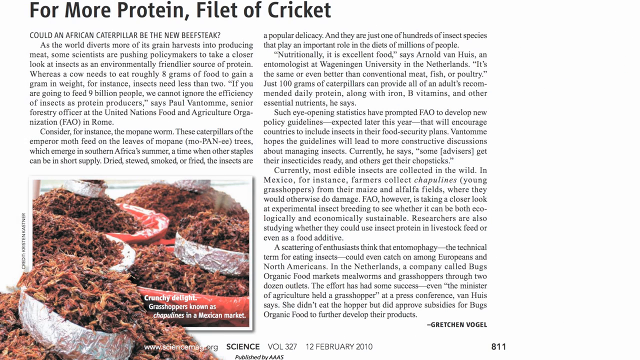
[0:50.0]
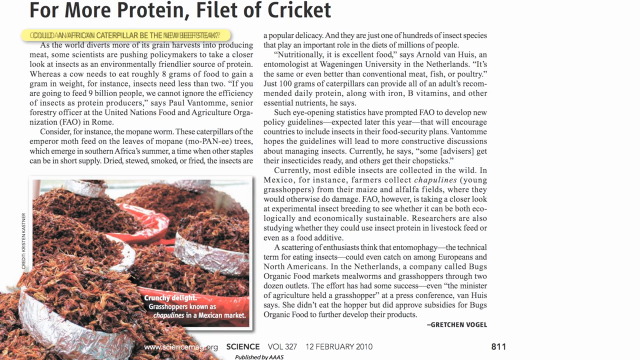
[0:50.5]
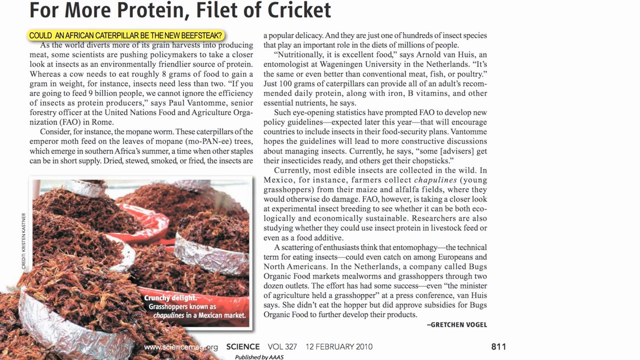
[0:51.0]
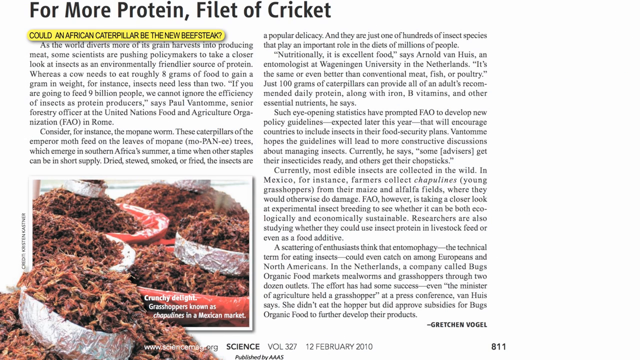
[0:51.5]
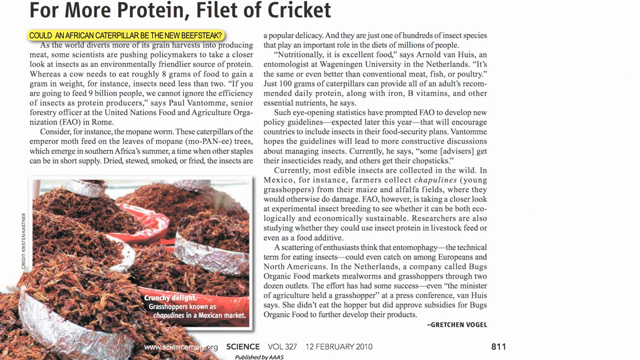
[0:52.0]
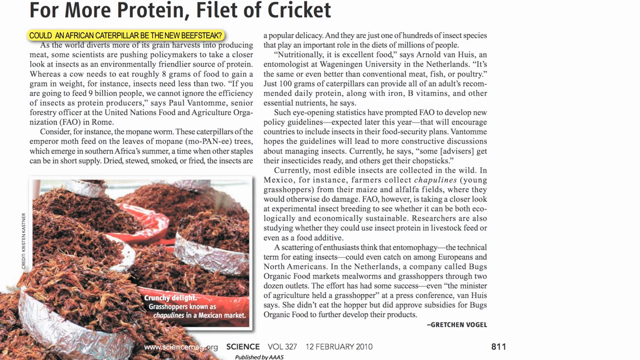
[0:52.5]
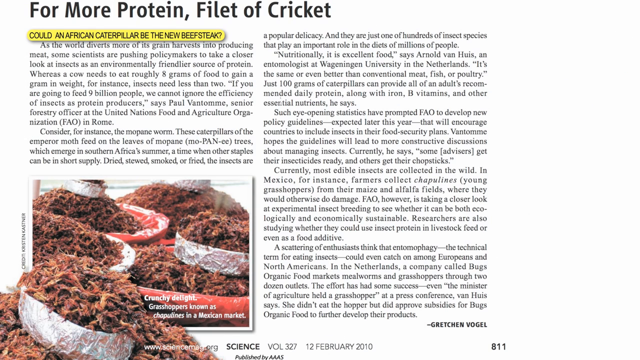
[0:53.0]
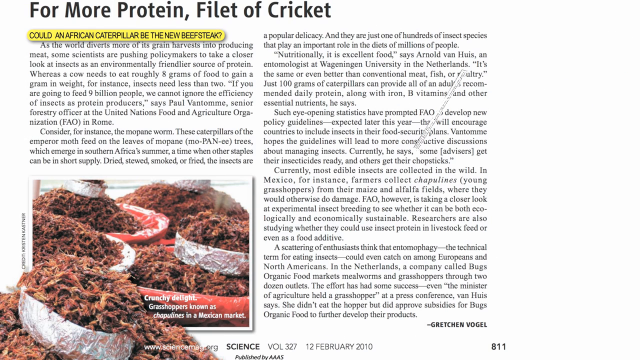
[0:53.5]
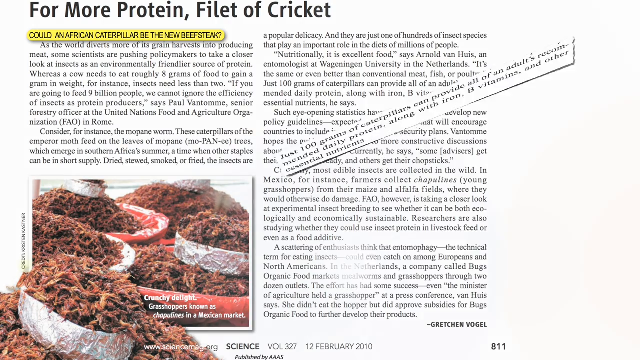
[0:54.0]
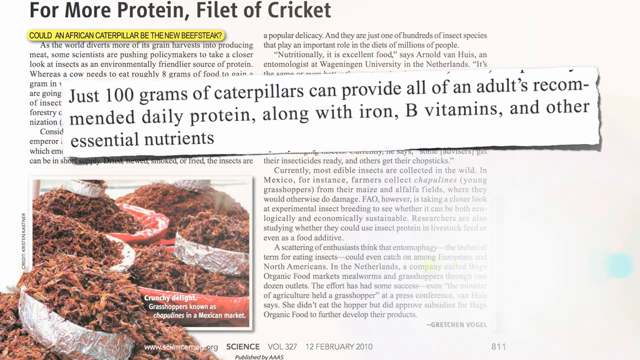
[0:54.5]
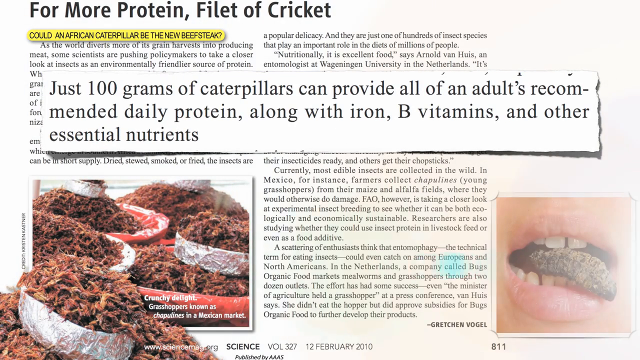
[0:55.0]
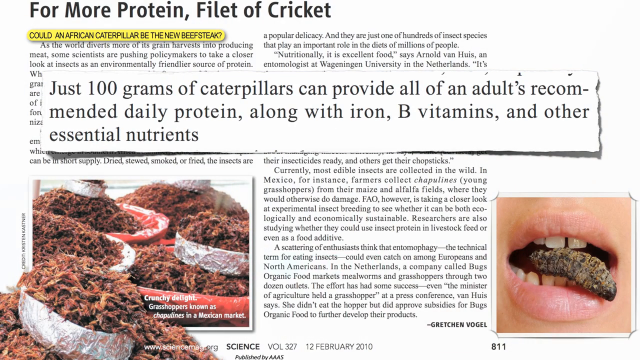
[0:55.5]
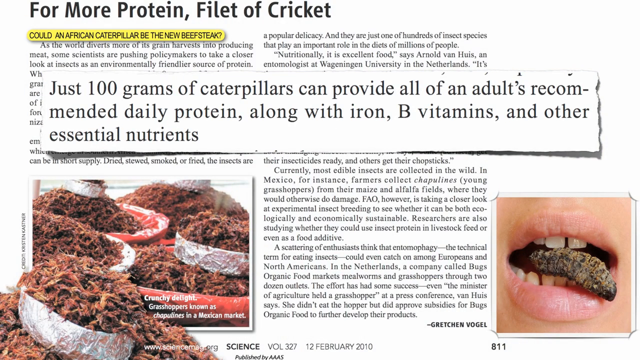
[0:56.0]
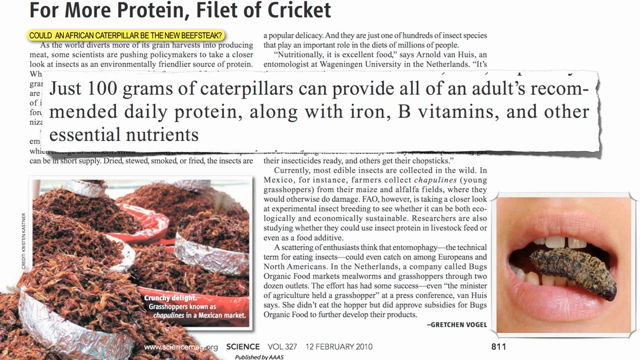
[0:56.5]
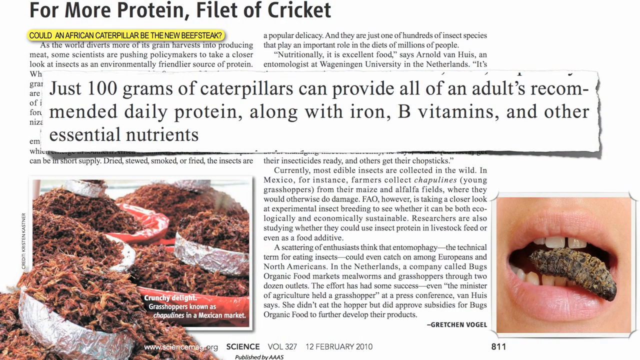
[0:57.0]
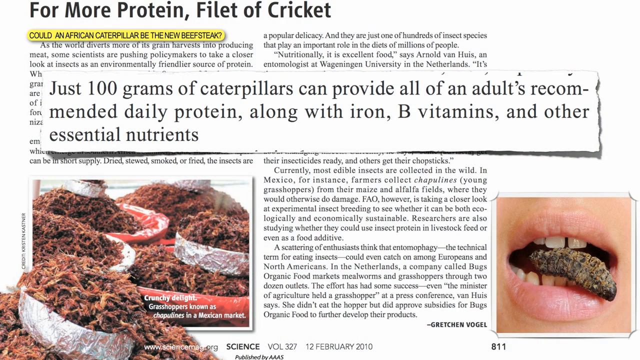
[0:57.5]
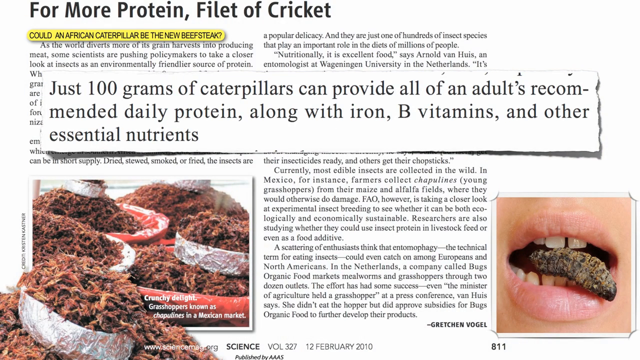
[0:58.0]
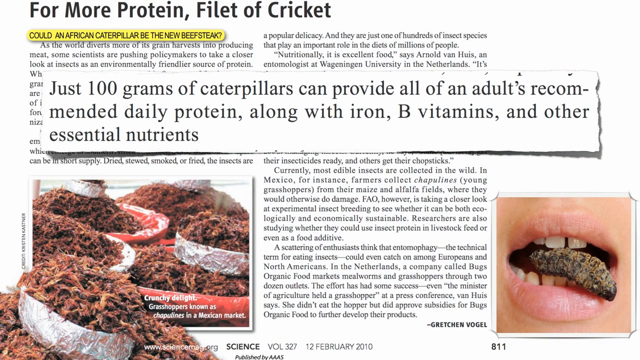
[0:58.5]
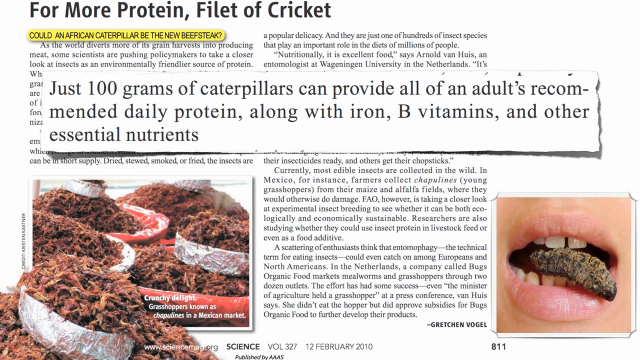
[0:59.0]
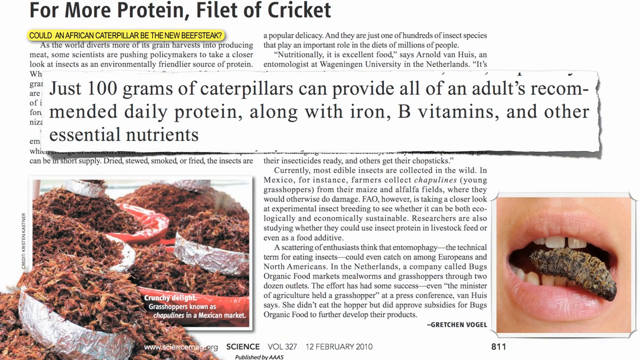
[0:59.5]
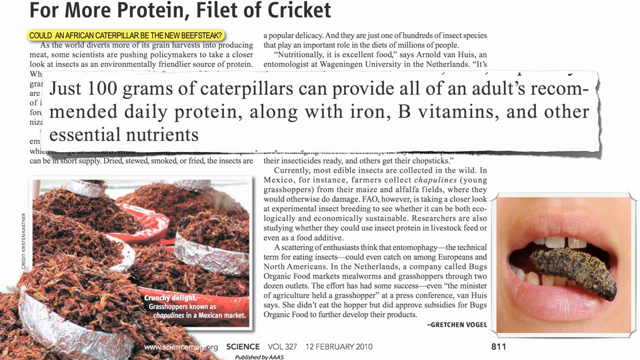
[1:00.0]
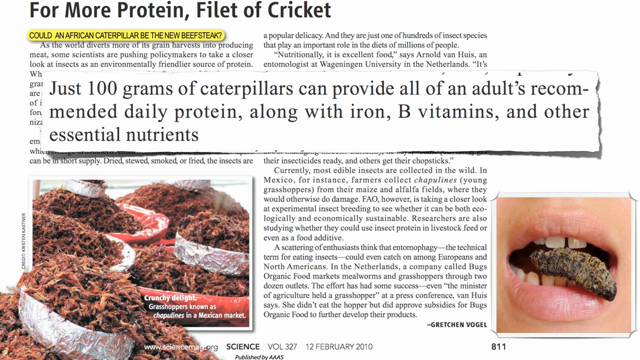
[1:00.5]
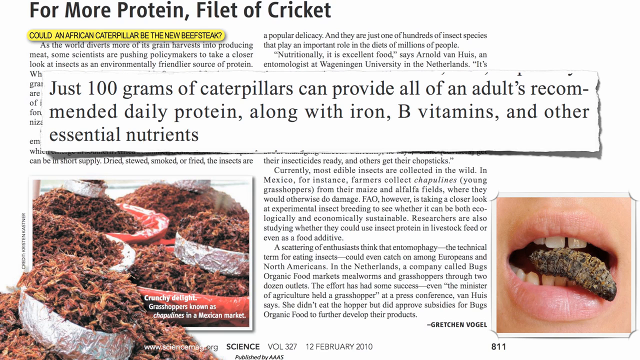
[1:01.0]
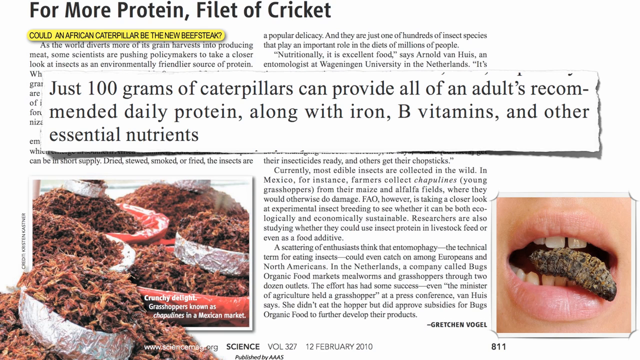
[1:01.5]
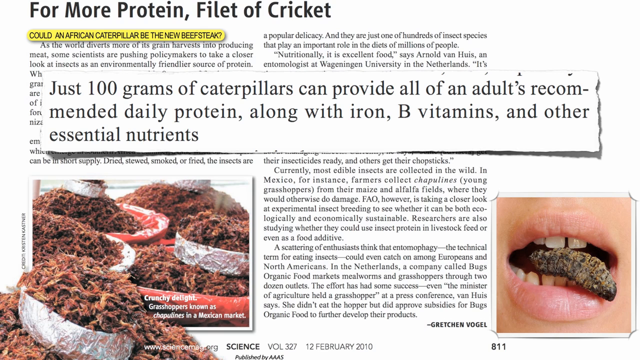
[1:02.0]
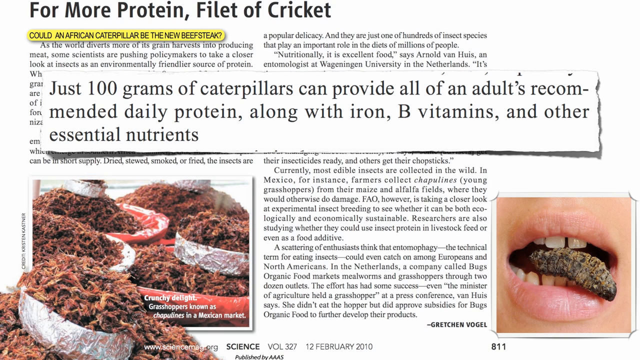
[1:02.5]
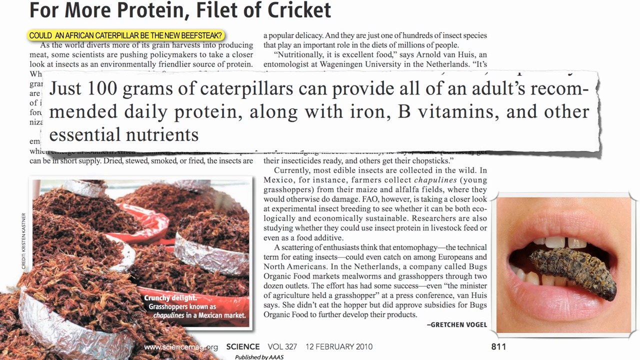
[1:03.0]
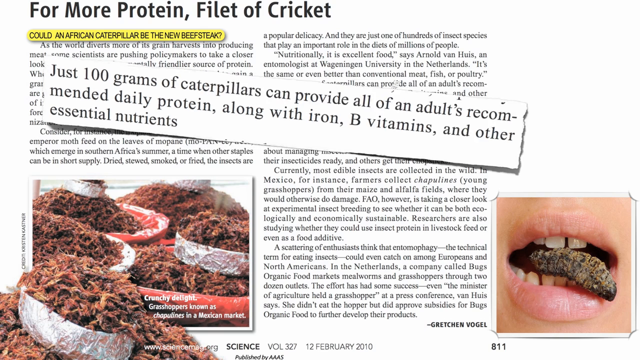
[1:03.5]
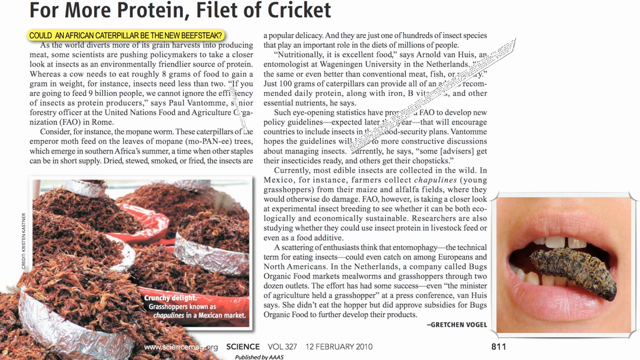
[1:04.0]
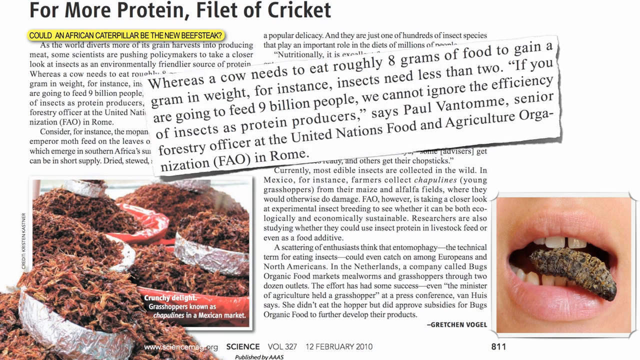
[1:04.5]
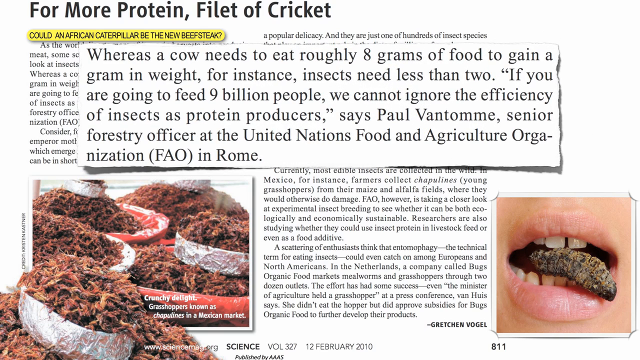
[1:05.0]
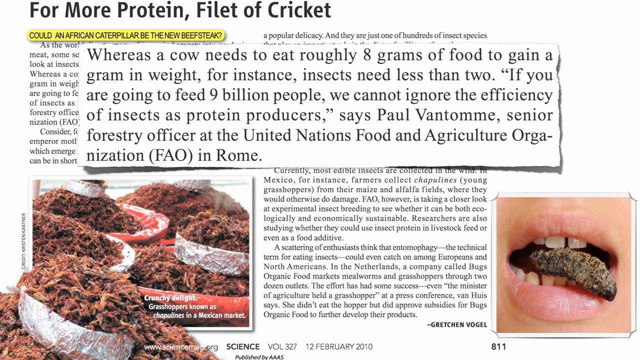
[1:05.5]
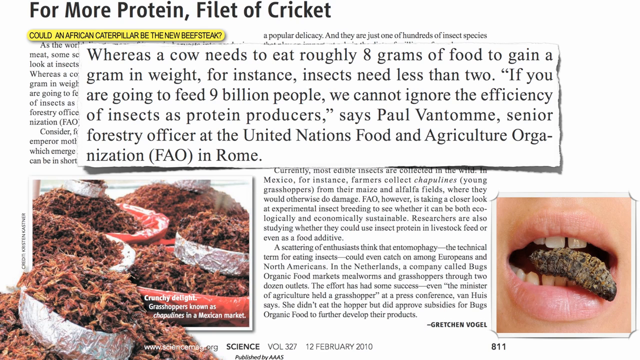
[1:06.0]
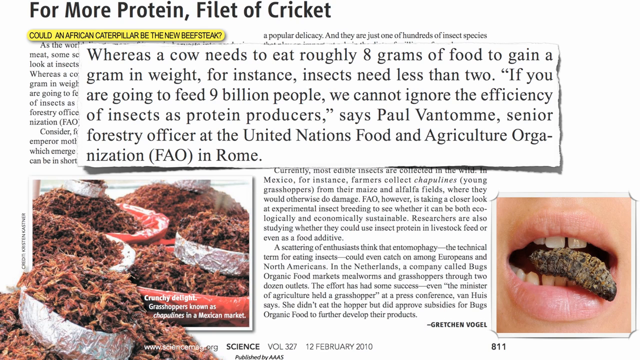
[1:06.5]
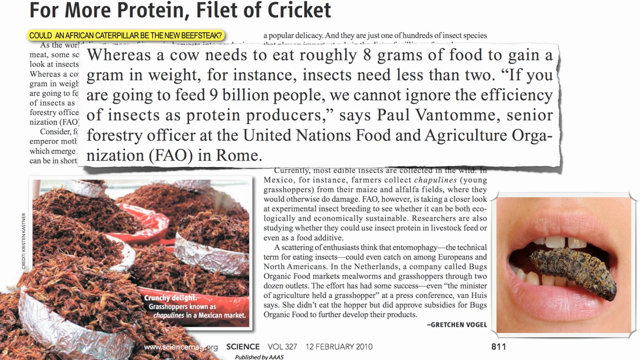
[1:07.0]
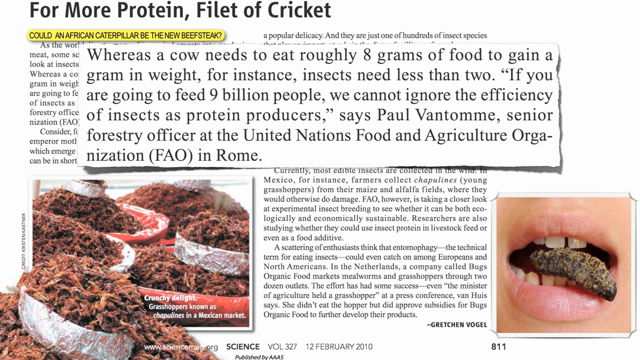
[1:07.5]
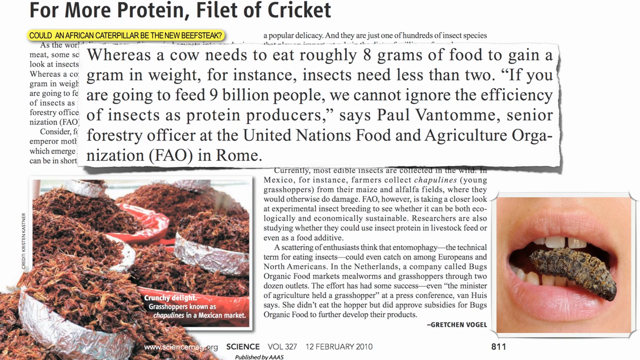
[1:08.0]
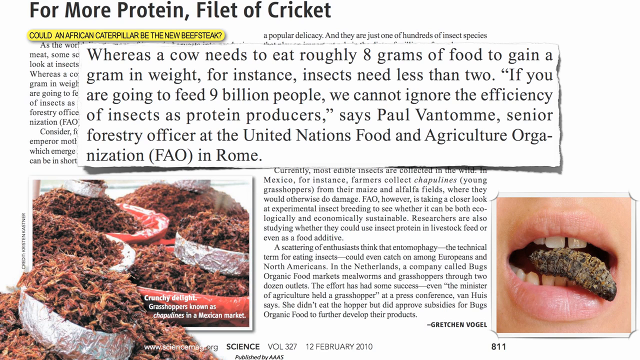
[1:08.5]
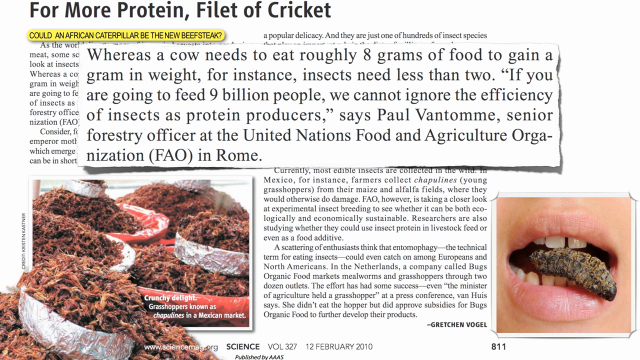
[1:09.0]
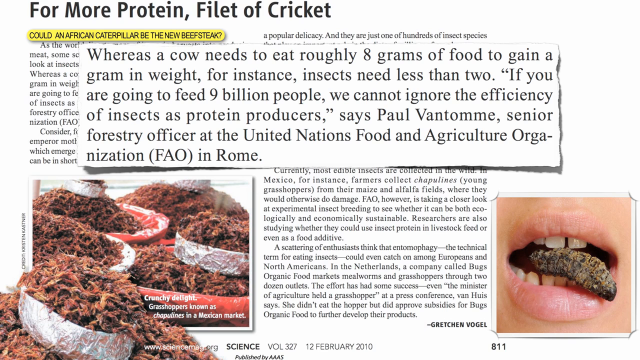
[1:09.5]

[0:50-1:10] An article appears, with a thin white border down the left side and a white border covering about a quarter of the page on the right side. Across the top, big bold black letters read "For more protein, fillet of cricket." Below that are two paragraphs and an image that looks like a bunch of dirt in bowls, or maybe grilled cricket, with small text in the bottom right corner of the image. To the right of it, paragraphs of words run from the top to the bottom. Just below the headline, a yellow section lights up reading "Could an African caterpillar be the new beefsteak?" Then a rectangle across the center reads "just 100 grams of caterpillars can provide all of an adult's recommended daily protein along with iron, B vitamins, and other essential nutrients." In the bottom left corner is a close-up of a mouth with a caterpillar inside it. The rectangle in the center goes away and another comes up with a paragraph of information.